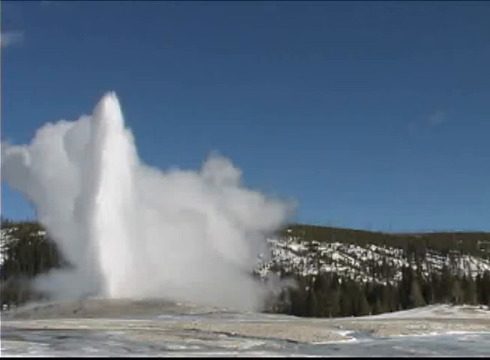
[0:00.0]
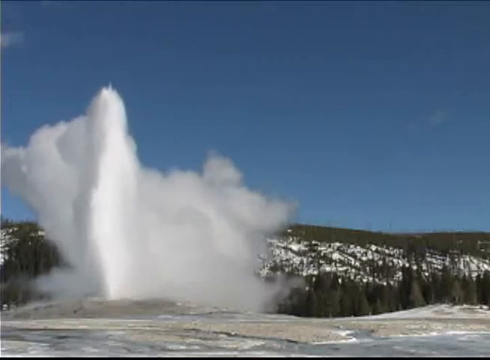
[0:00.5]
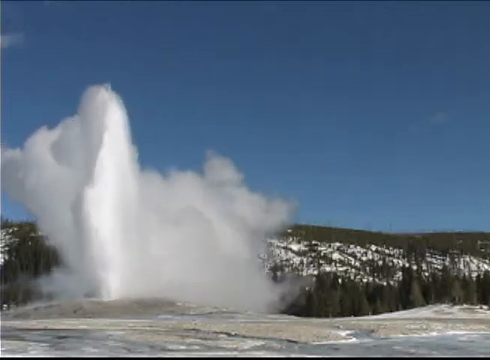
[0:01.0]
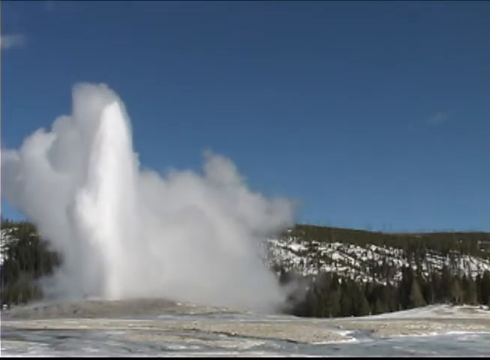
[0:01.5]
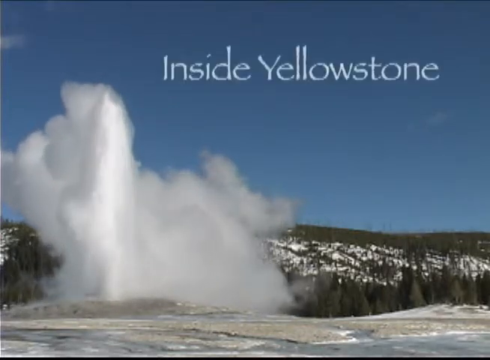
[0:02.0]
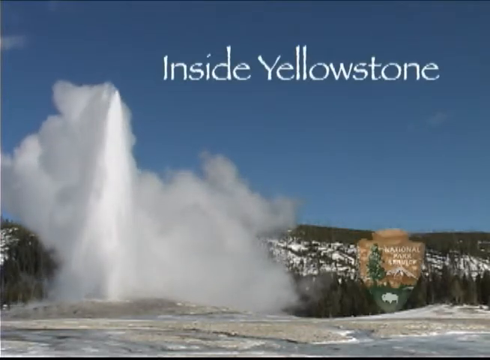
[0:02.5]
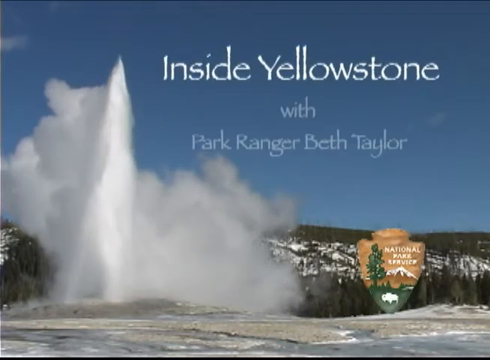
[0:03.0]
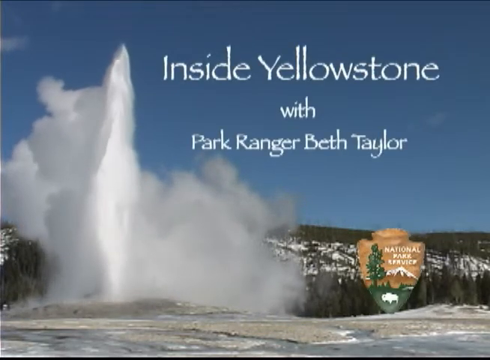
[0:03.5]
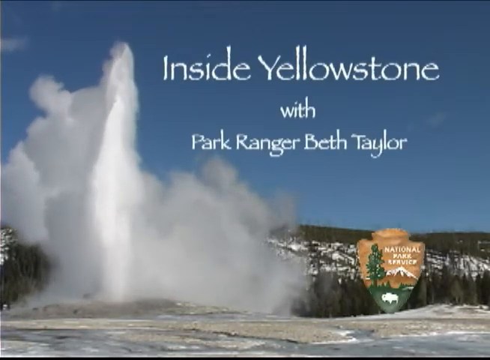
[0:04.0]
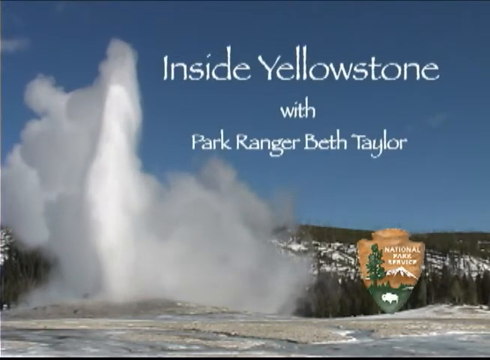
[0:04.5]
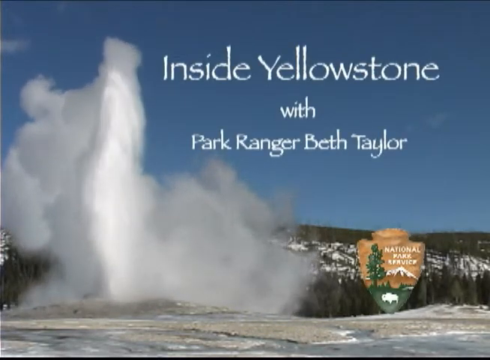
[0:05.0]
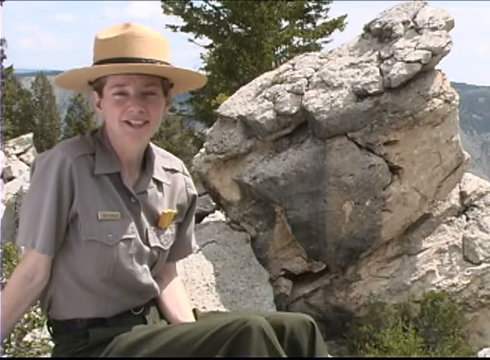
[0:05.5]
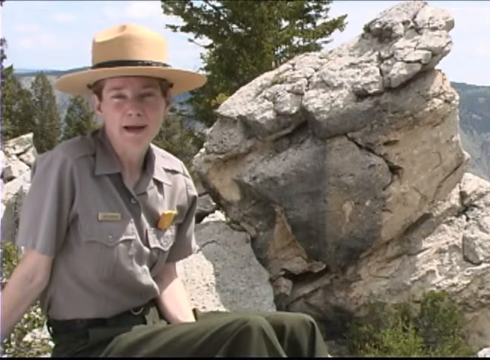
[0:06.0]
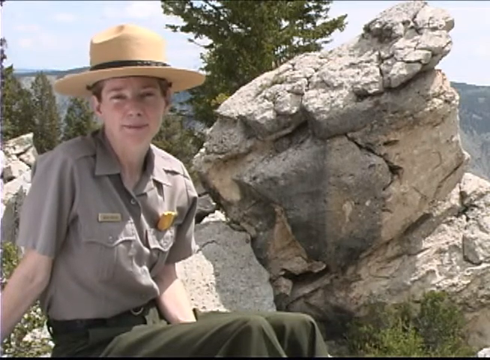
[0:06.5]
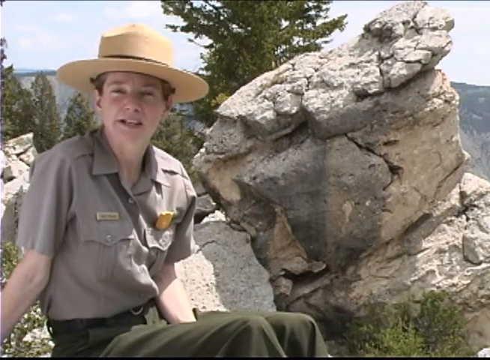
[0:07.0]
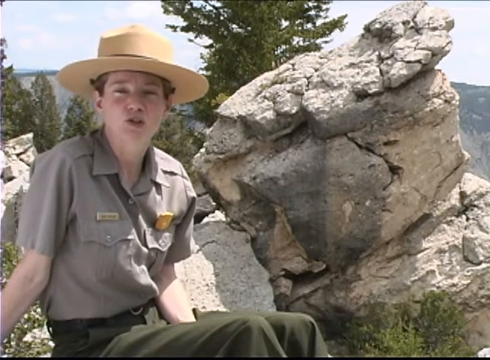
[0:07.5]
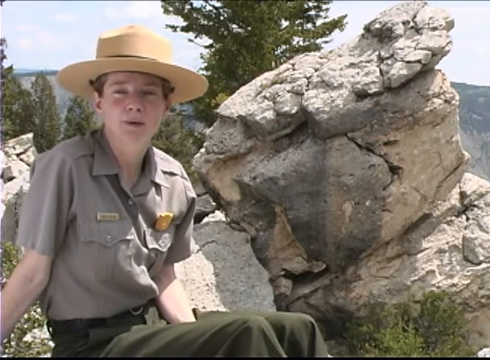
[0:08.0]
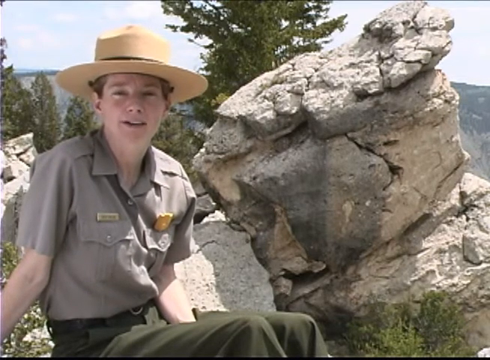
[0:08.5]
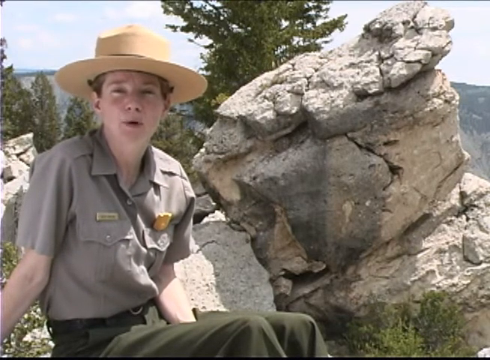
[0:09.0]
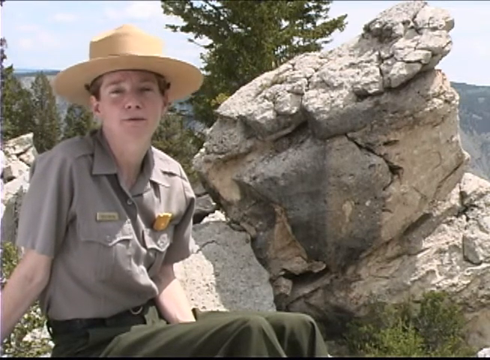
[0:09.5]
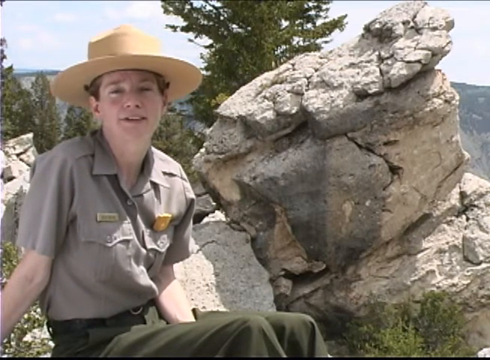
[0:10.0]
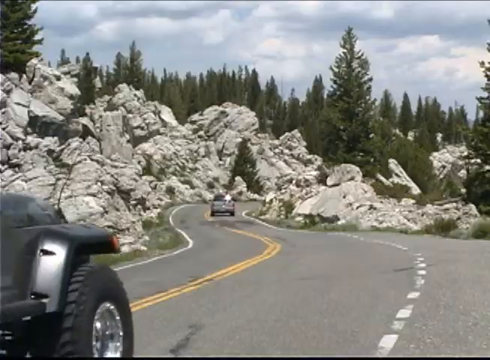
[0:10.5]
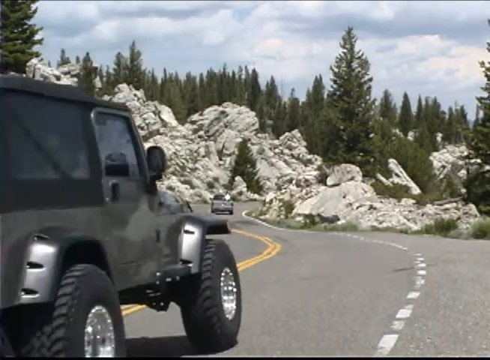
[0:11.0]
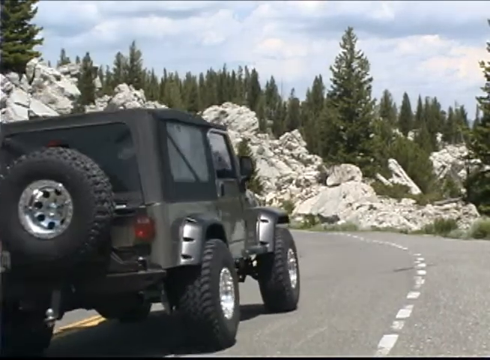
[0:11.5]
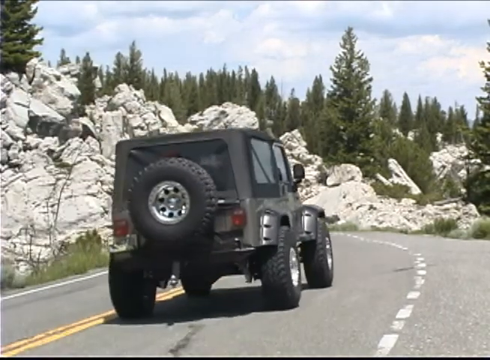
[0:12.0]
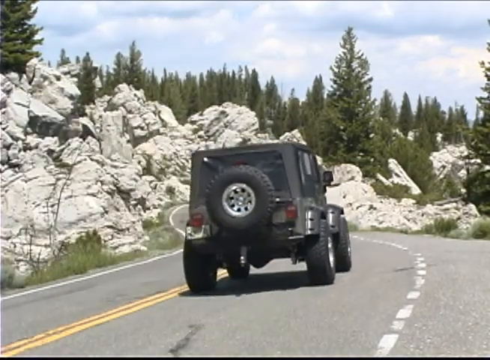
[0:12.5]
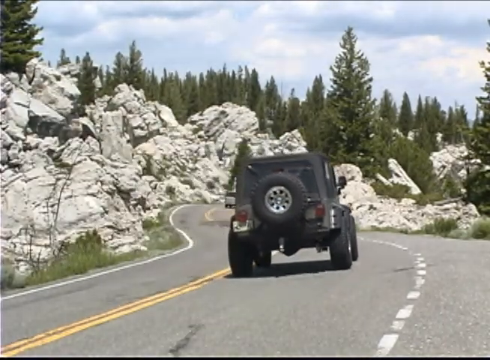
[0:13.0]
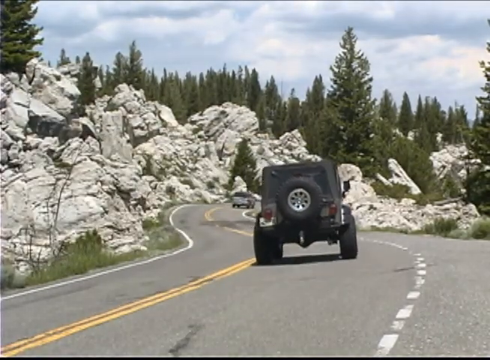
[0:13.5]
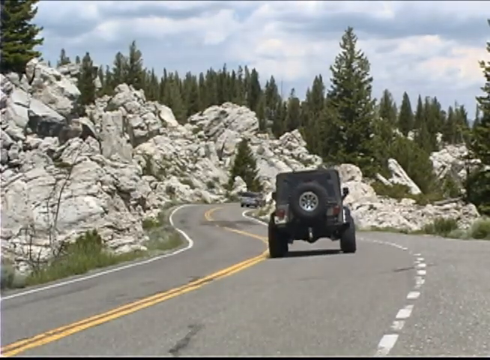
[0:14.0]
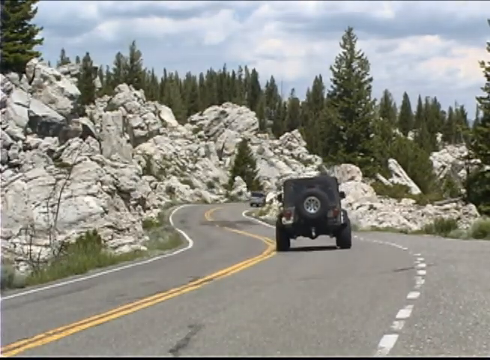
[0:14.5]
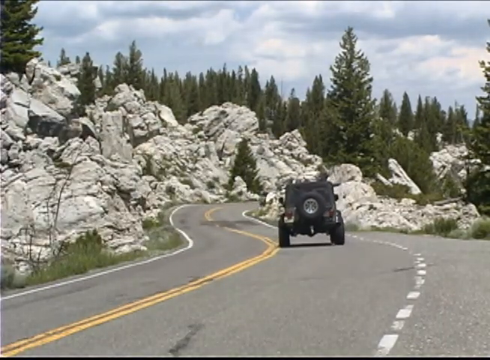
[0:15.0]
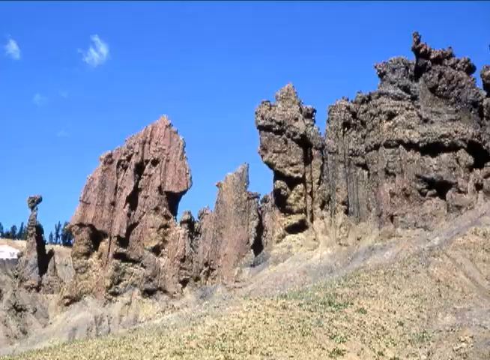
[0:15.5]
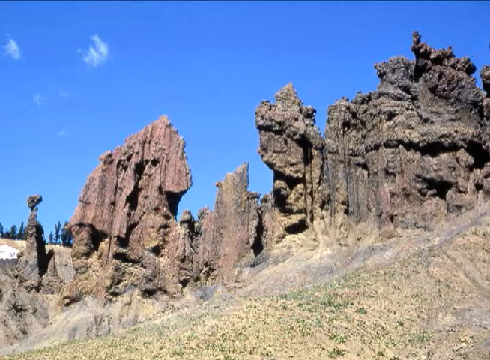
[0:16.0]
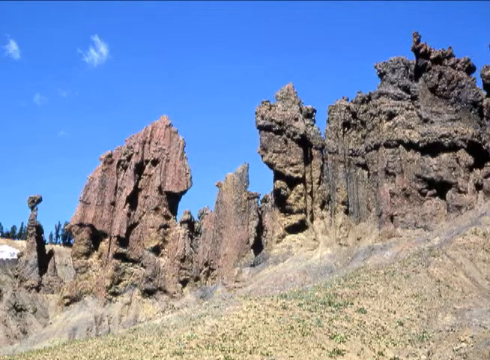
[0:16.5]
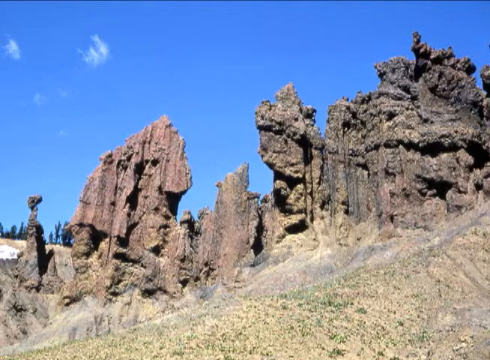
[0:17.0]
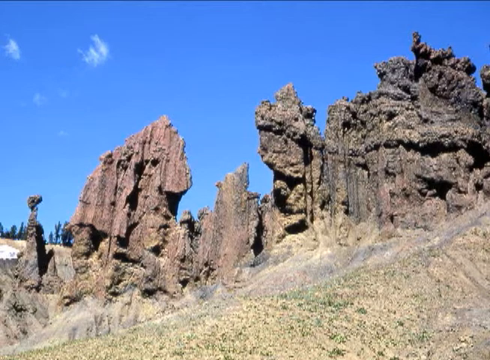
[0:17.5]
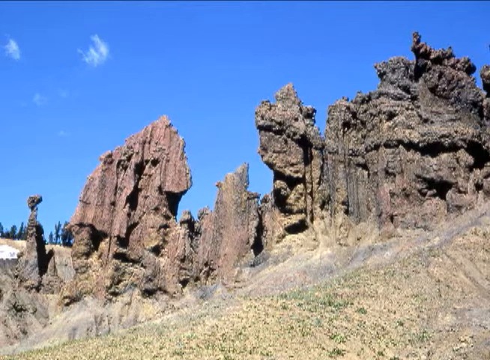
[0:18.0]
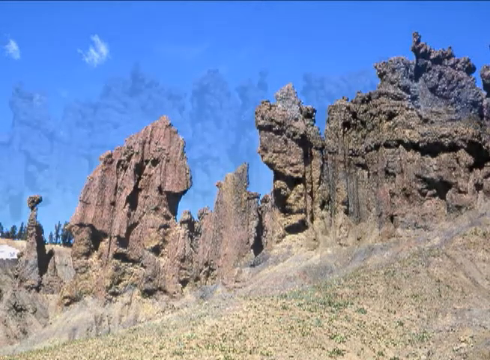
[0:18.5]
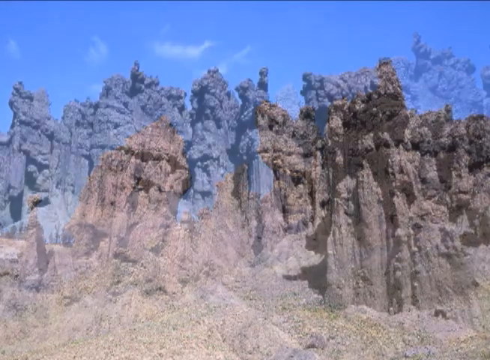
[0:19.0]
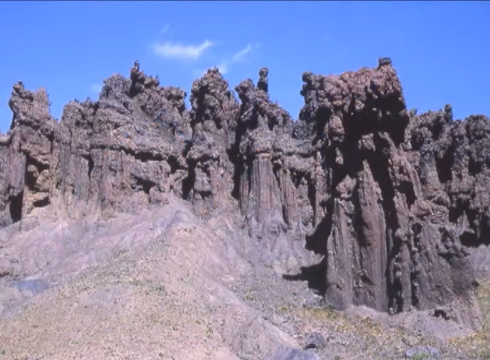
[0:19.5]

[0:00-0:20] A waterfall is visible, and there is a road beside the truck area. The place is inside Yellowstone Park. A boy appears, seemingly talking about the park or the place.